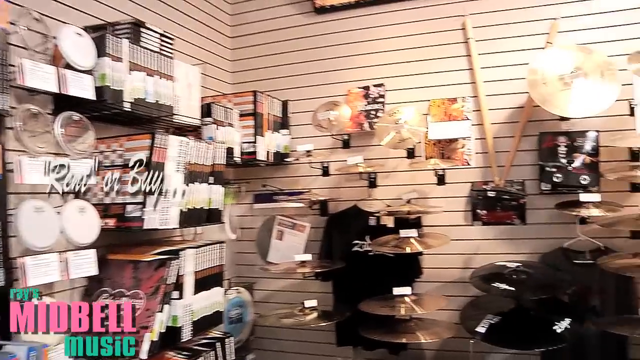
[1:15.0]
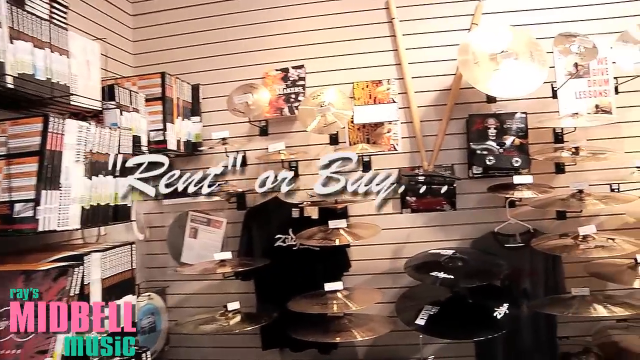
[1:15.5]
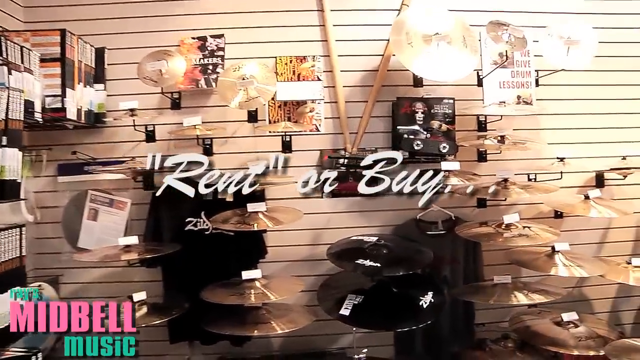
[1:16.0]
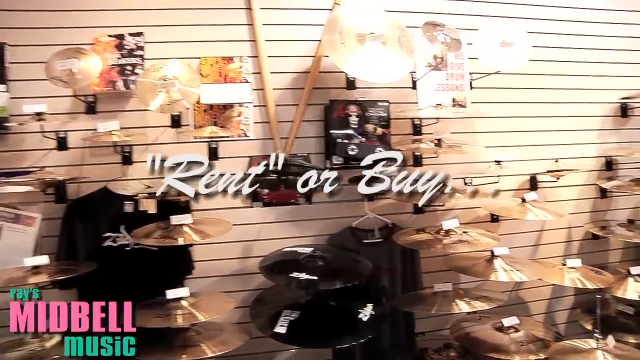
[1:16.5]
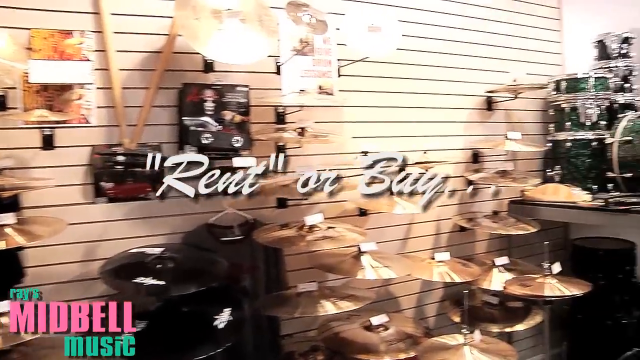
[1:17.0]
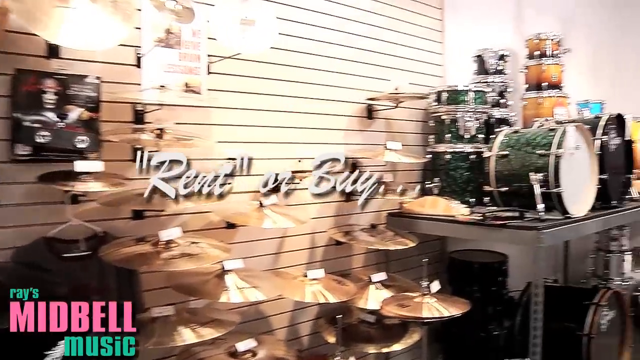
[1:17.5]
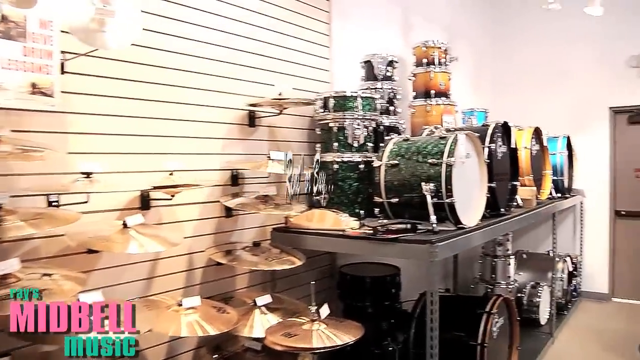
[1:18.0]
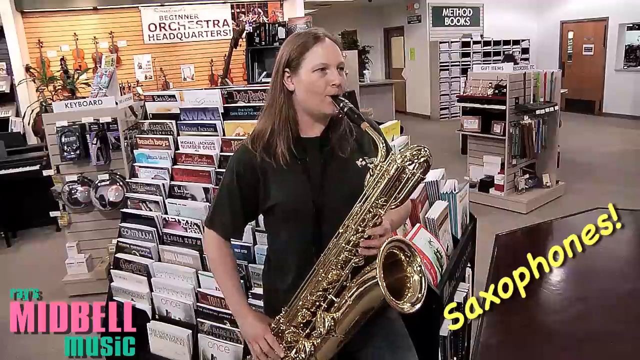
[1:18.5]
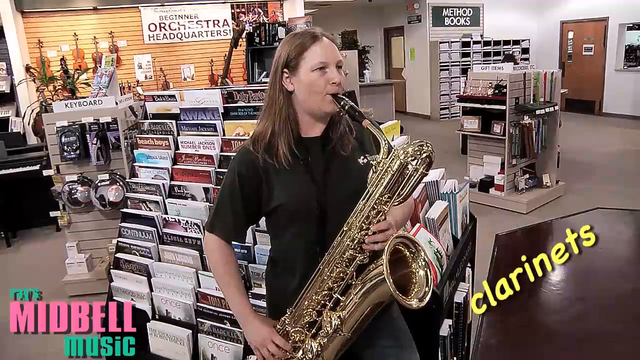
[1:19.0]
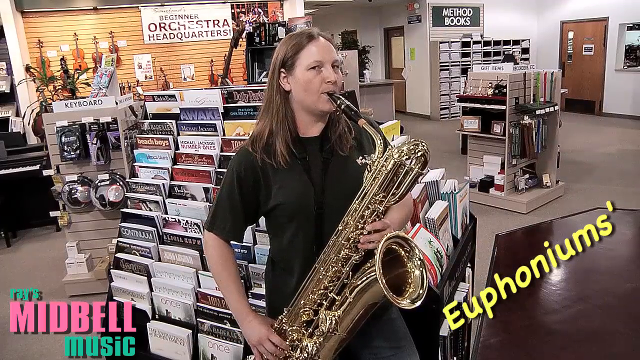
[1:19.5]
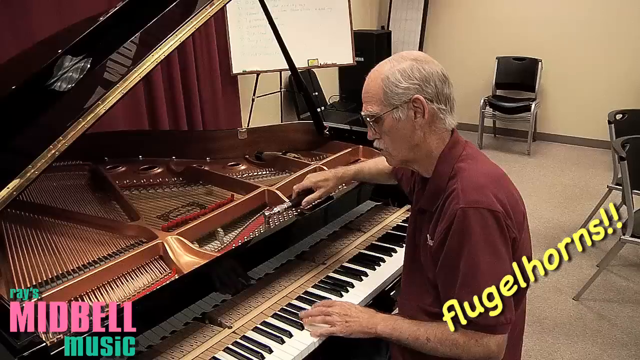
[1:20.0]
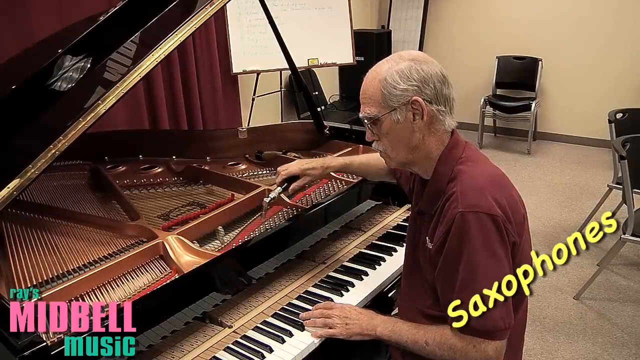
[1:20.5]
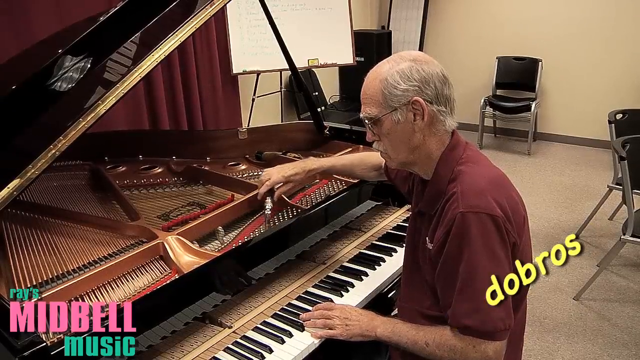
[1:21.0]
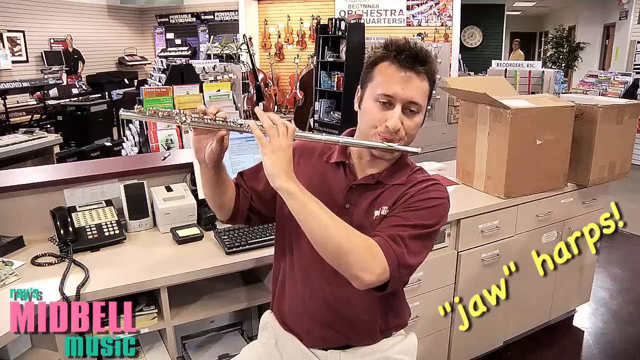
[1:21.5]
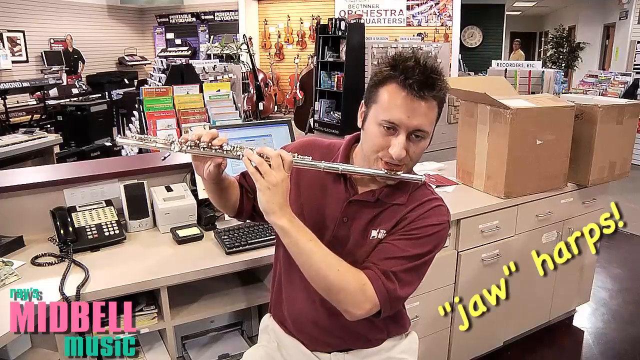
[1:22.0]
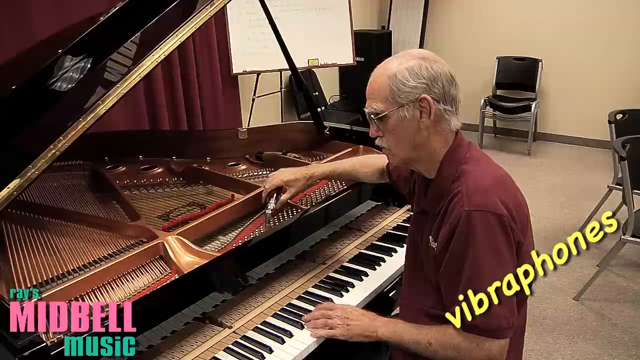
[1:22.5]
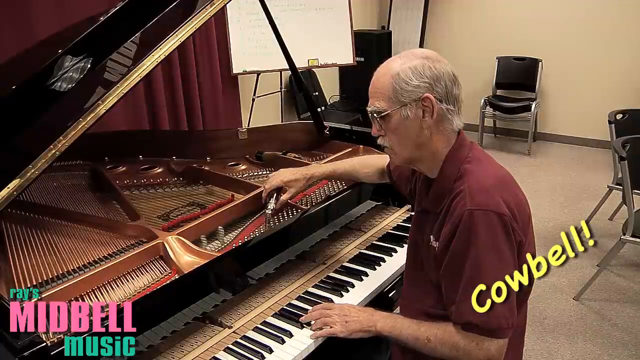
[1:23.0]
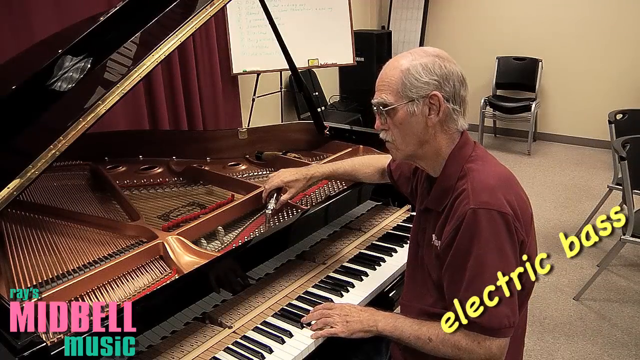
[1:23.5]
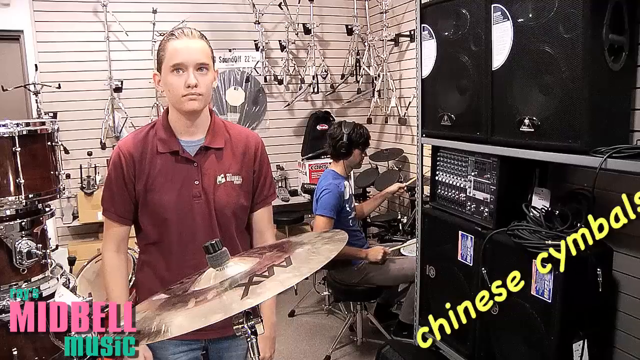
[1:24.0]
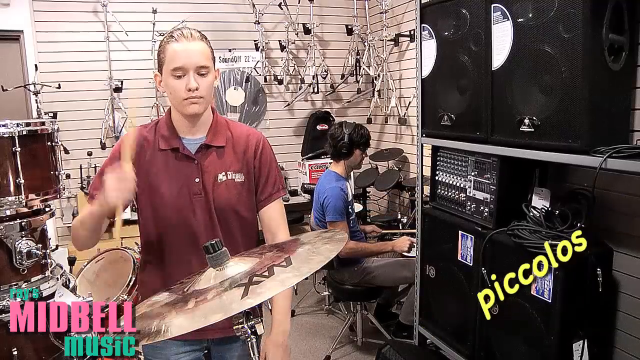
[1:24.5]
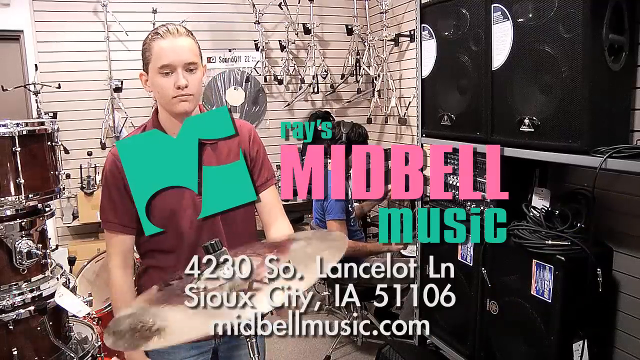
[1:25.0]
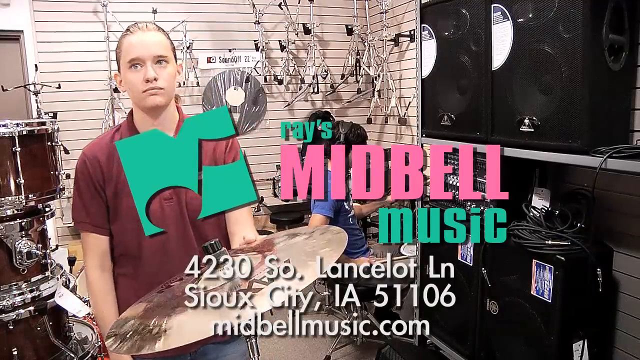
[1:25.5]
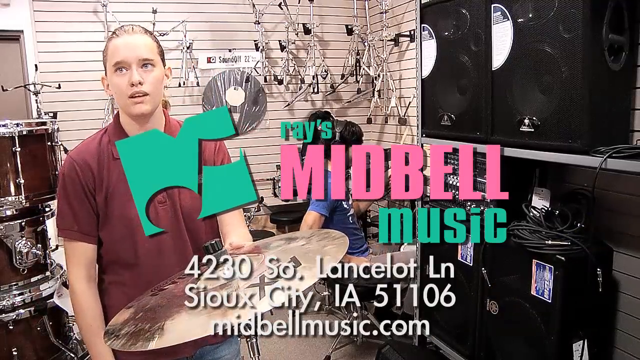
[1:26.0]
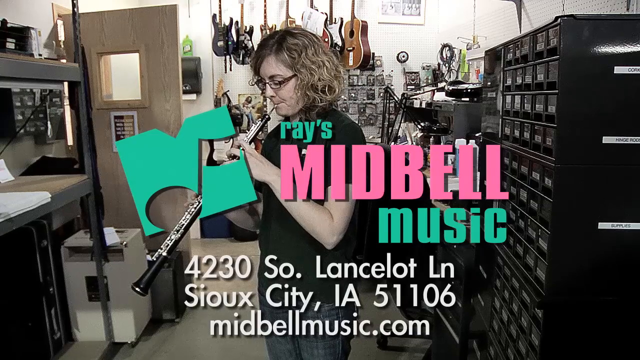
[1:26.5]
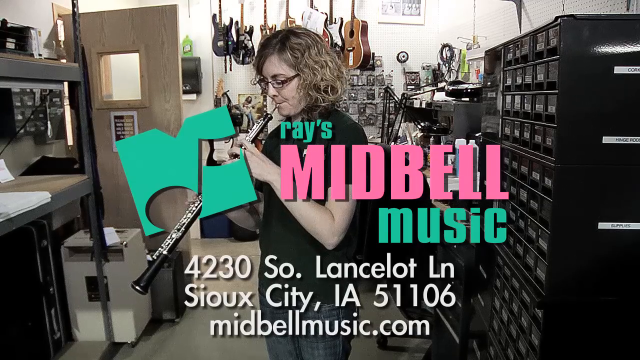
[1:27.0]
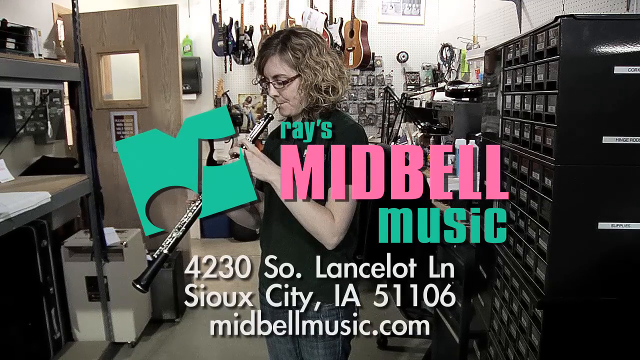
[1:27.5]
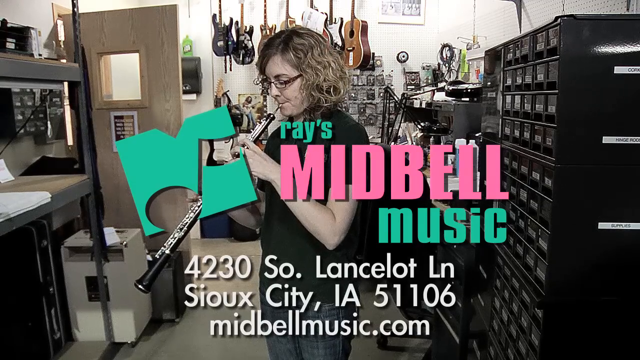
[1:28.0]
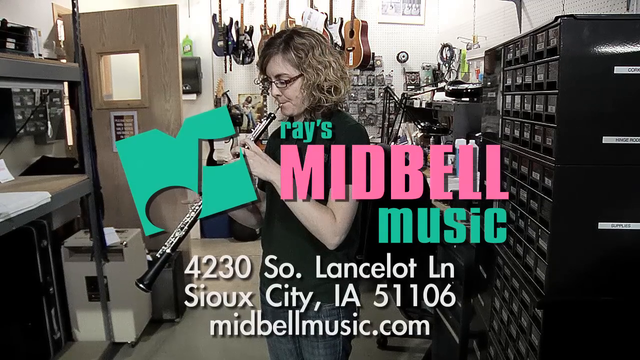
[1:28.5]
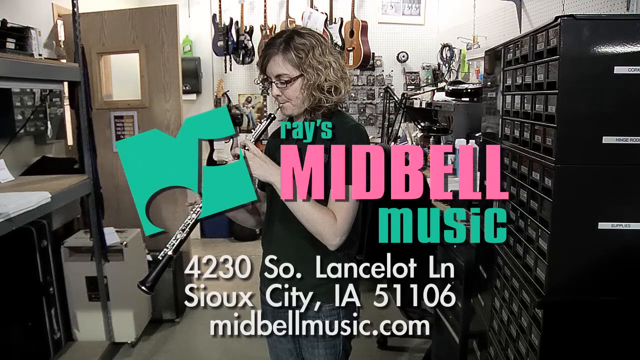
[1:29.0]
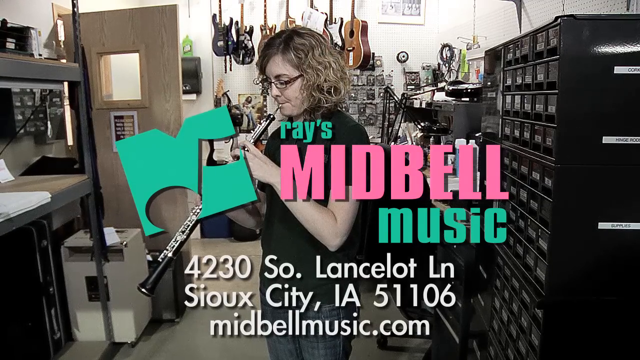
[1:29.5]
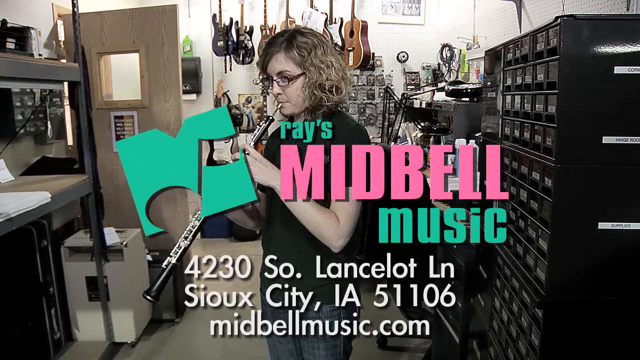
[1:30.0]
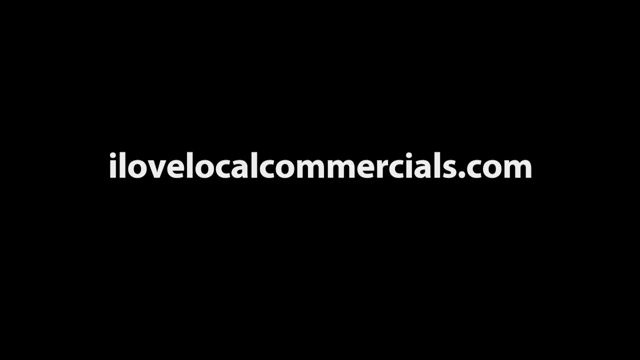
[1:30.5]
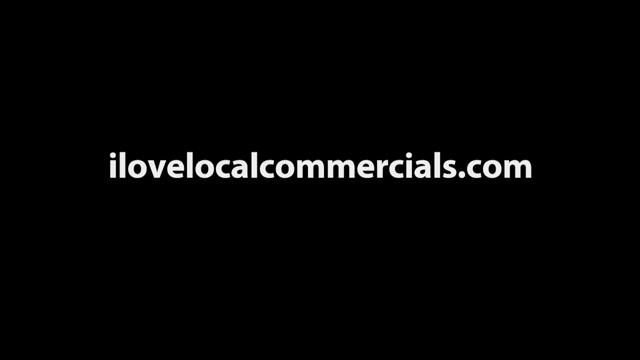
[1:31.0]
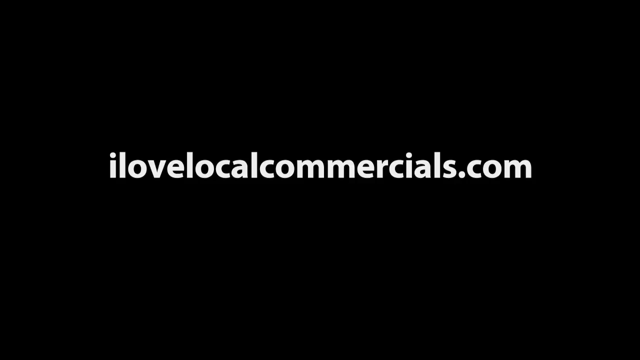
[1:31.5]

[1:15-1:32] The video continues with a pan of the entire store, and text flashes over the scenes. Over the store pan the text reads "rent or buy". It then switches to different employees playing different instruments, while text in the bottom right corner lists types of instruments, such as "clarinets, trumpets, cowbells, bugle horns". At the very end, the Raise Midbell logo appears along with the store location and website, and the video finishes on a black screen with "I lovelocalcommercials.com". The scenes appear to feature different people in different parts of the Midbell store.